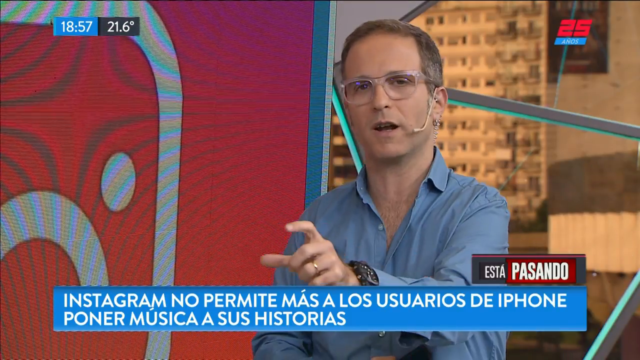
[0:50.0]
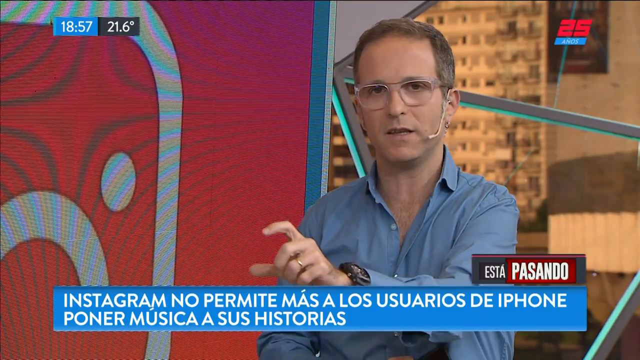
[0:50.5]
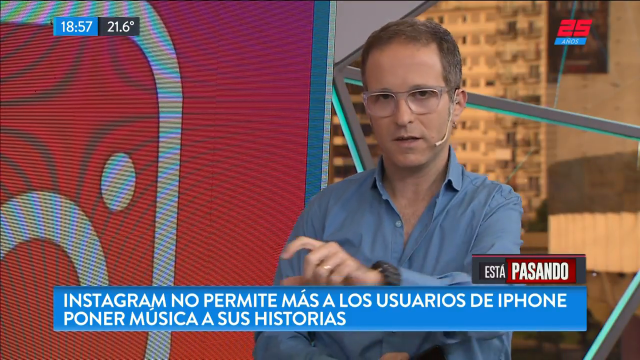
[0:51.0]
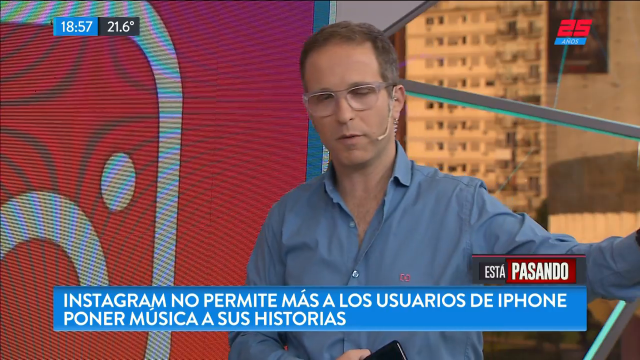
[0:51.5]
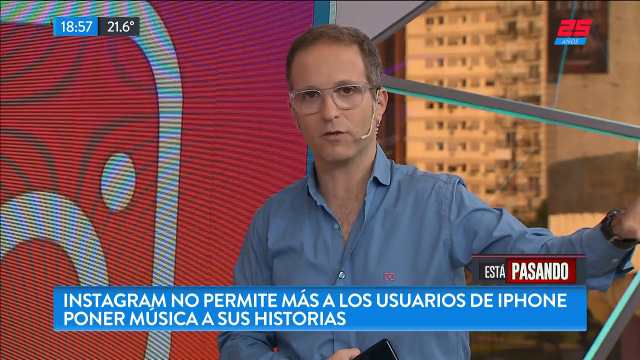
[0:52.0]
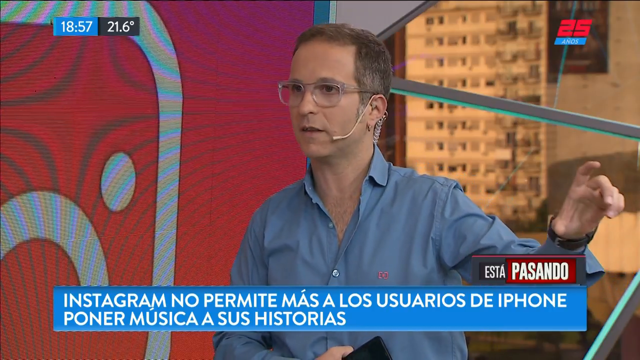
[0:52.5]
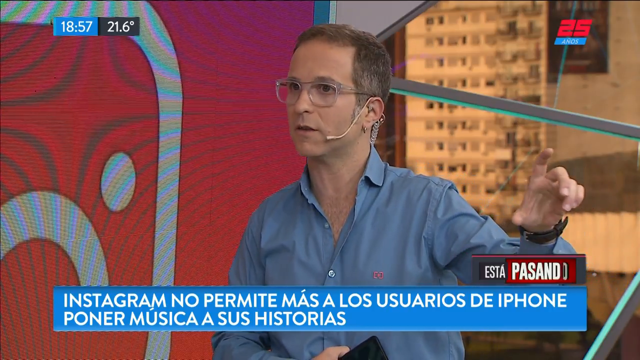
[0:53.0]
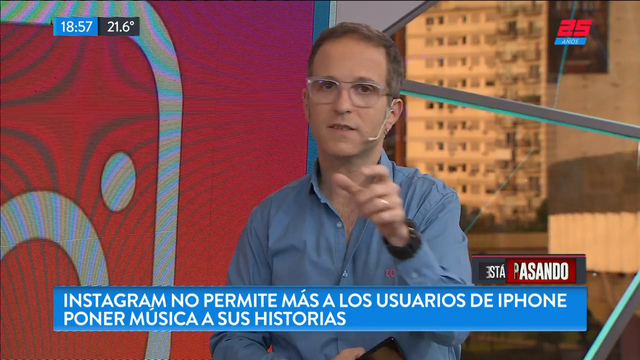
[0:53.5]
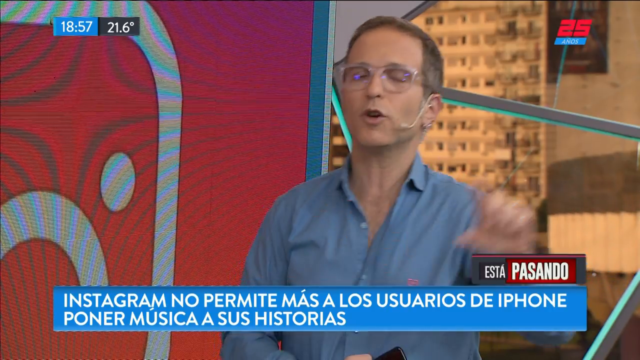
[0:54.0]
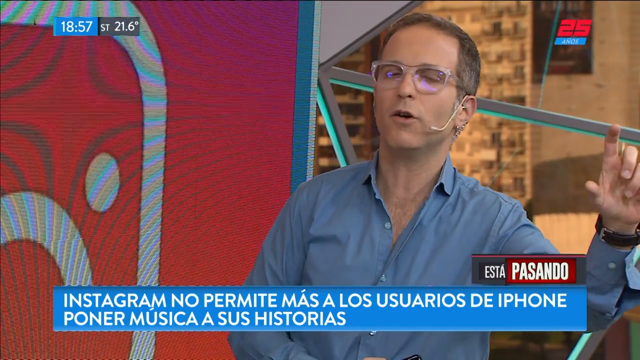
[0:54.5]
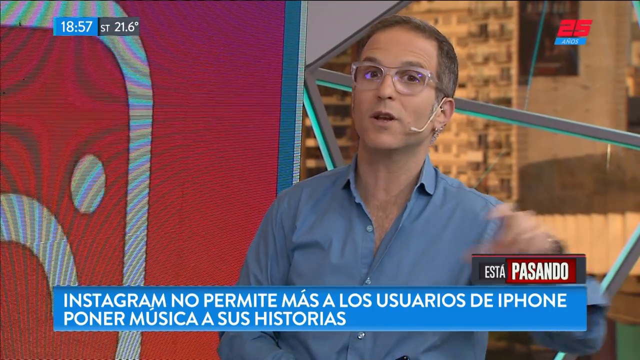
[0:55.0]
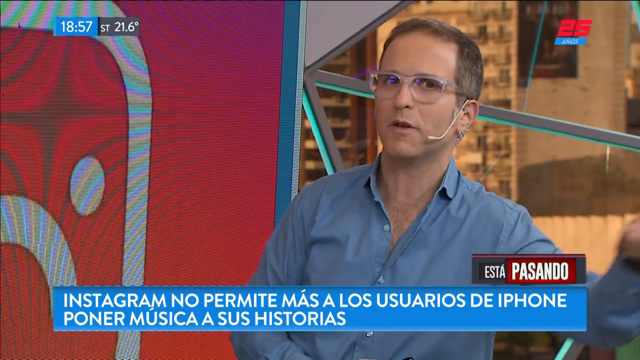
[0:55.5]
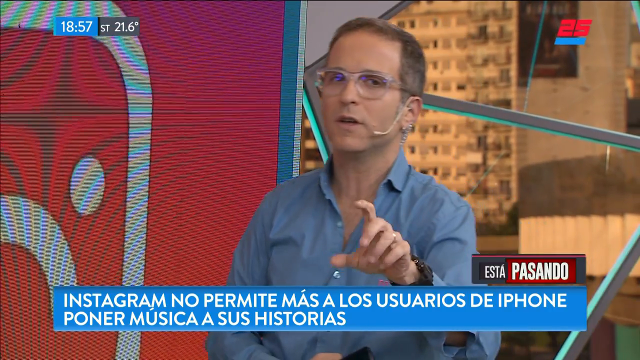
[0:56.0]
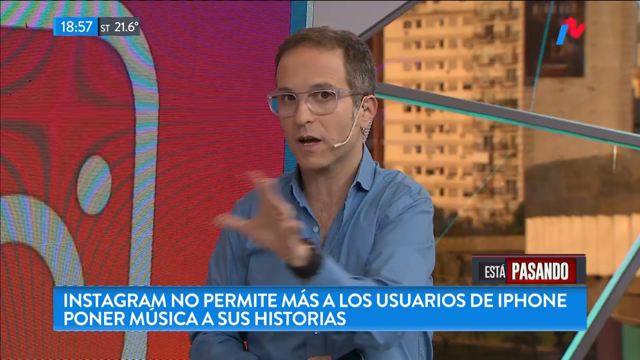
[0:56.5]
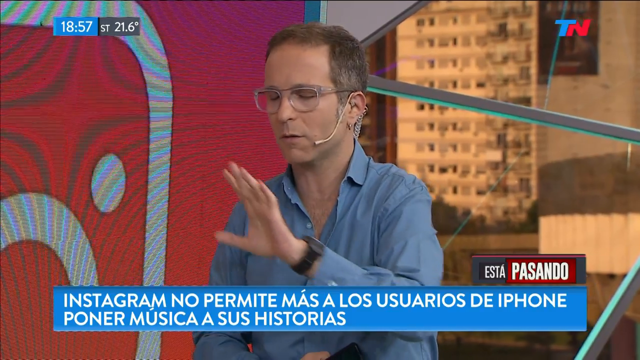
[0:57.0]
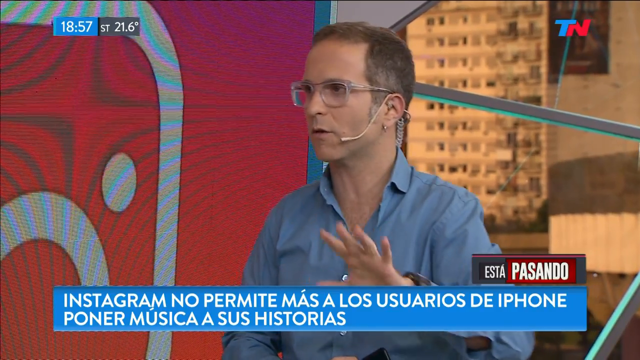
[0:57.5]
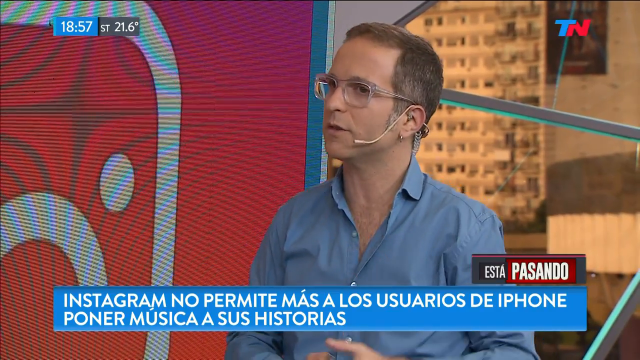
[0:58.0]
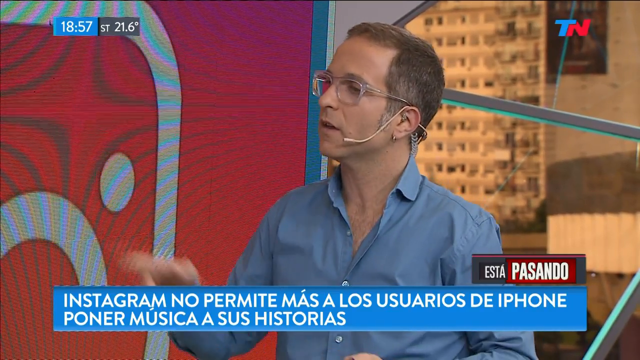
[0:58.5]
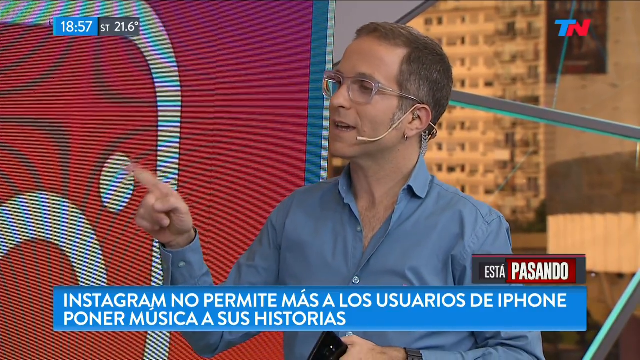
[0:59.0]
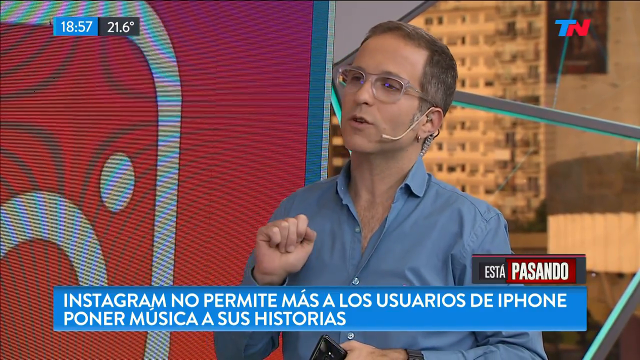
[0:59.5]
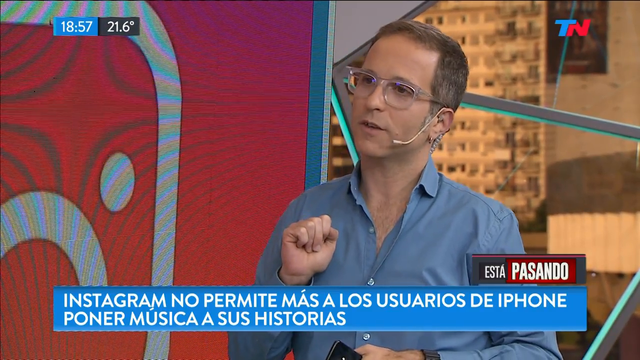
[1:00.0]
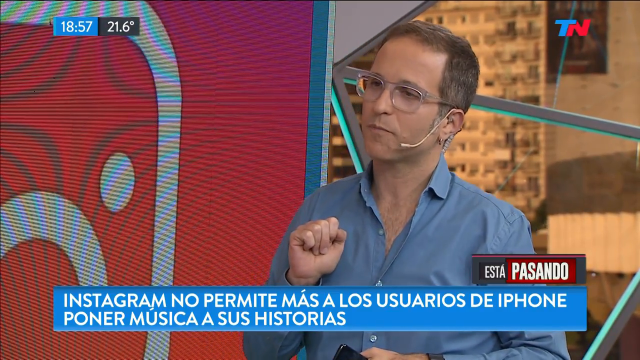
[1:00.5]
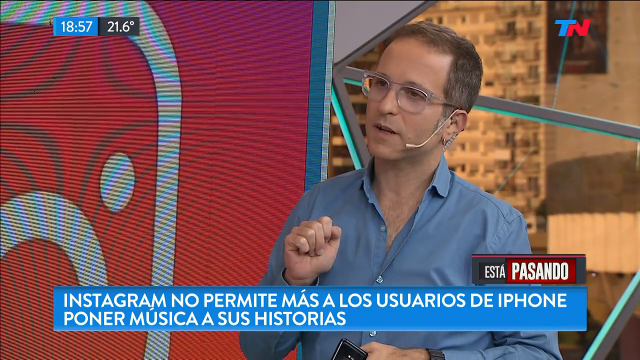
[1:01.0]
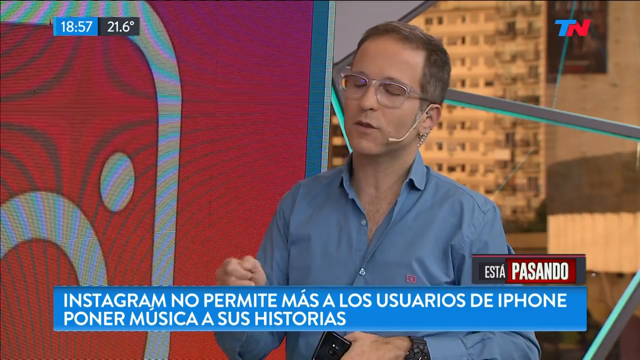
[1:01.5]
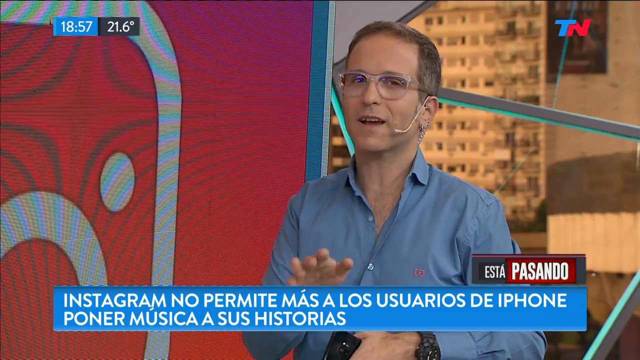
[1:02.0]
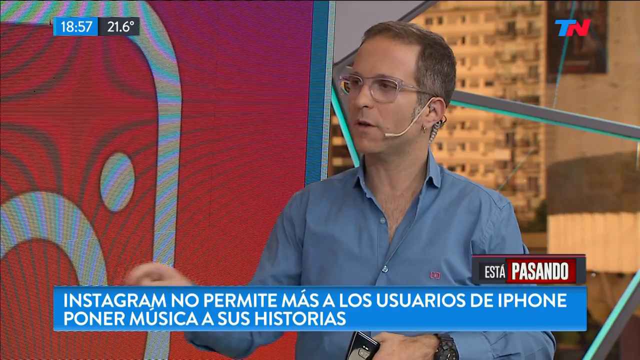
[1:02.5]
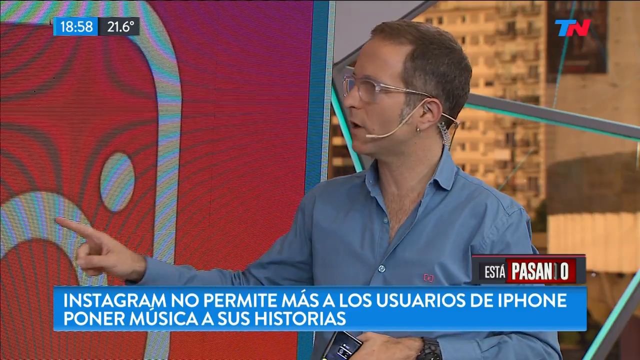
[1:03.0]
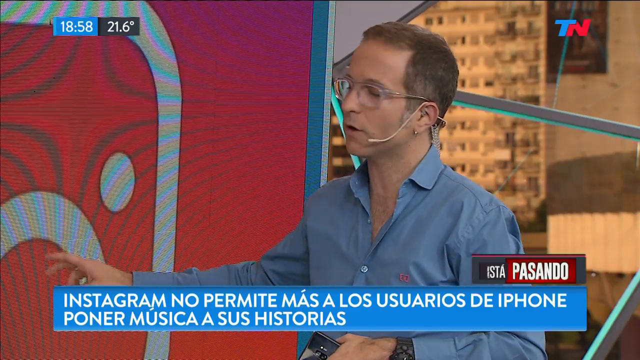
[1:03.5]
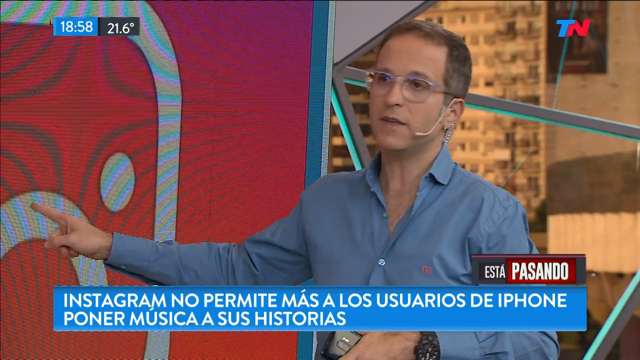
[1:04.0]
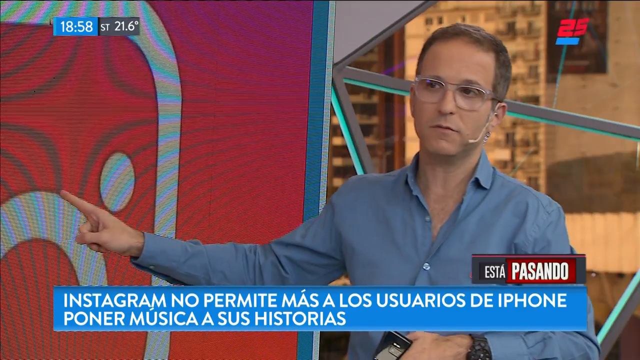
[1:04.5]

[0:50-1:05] The man wears khaki pants, a blue shirt, a watch and glasses, holds a black phone, and has a microphone over the left side of his face. He stands close to the big screen showing the Instagram logo turned into a frowny face. In the background there is perhaps a view of the city, like a building, and perhaps a window, possibly downtown Nashville. The top right corner alternates back and forth between "TN" and "25". The Spanish text on screen reads "Instagram no permite más a los usuarios de iPhone poner musicas en sus historias". The man keeps talking about the story, using his hands a lot; little else happens.